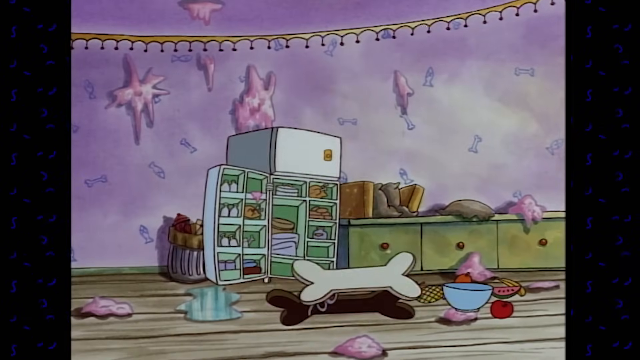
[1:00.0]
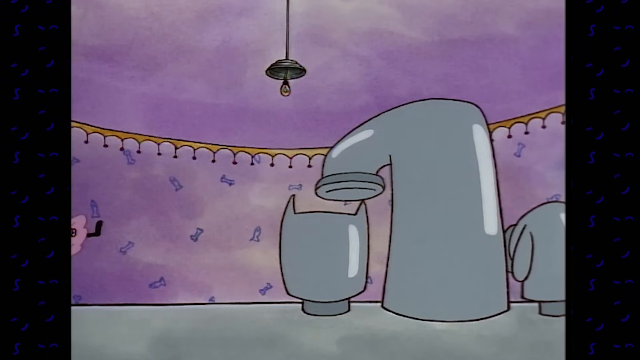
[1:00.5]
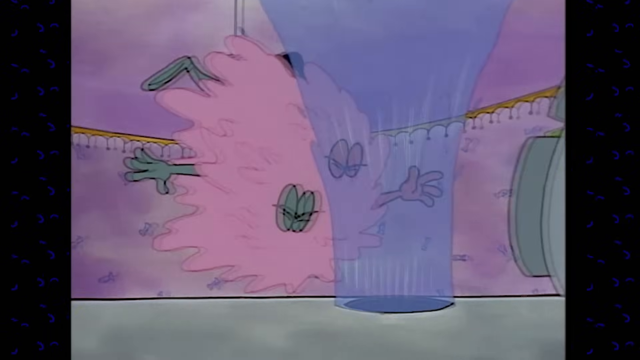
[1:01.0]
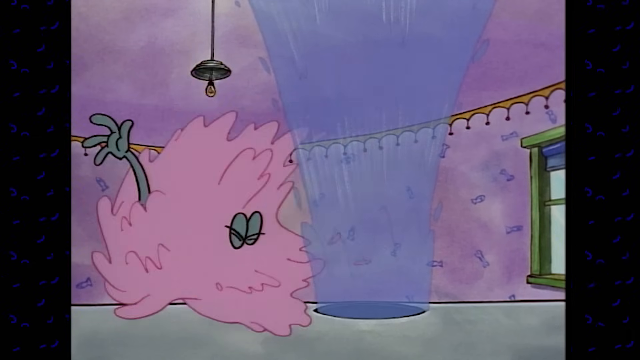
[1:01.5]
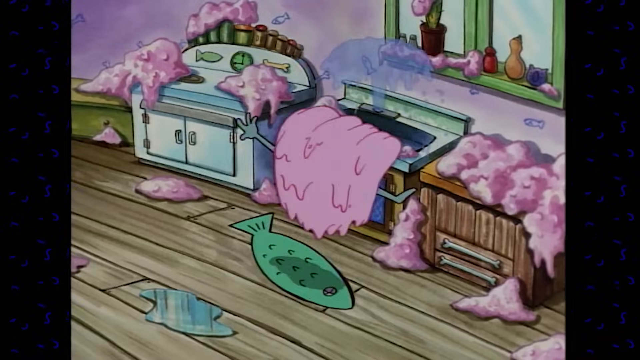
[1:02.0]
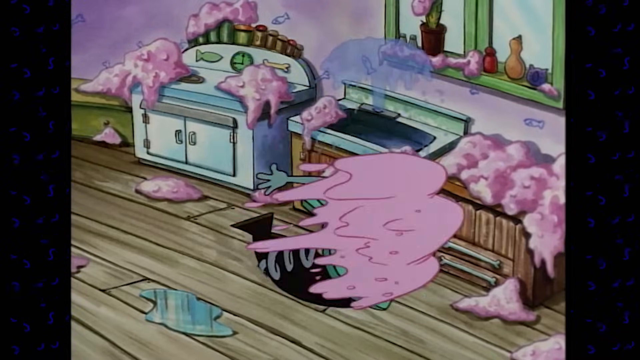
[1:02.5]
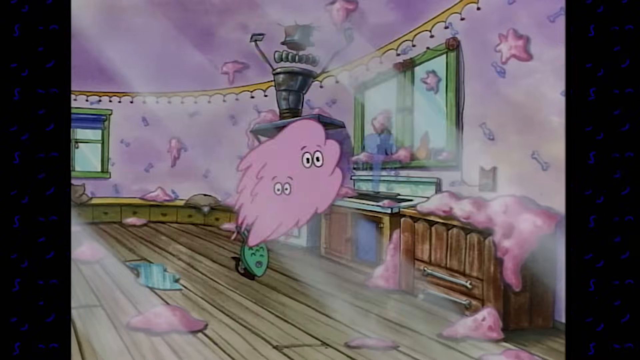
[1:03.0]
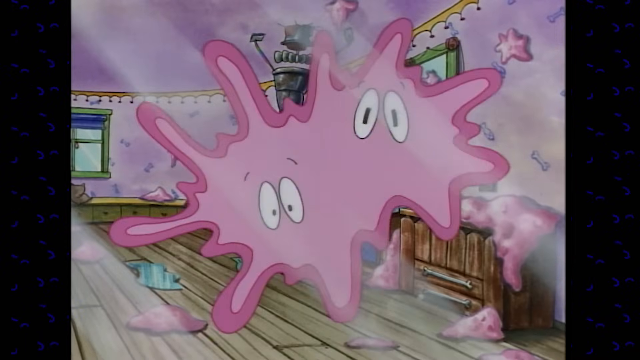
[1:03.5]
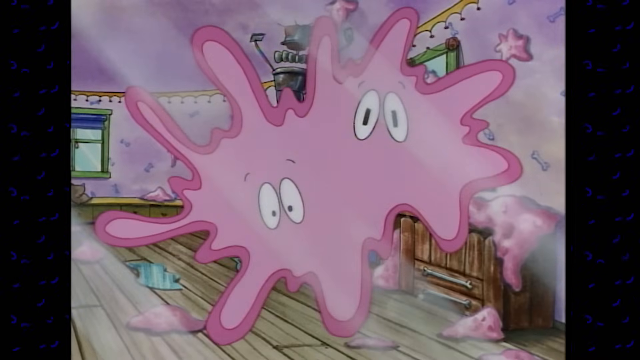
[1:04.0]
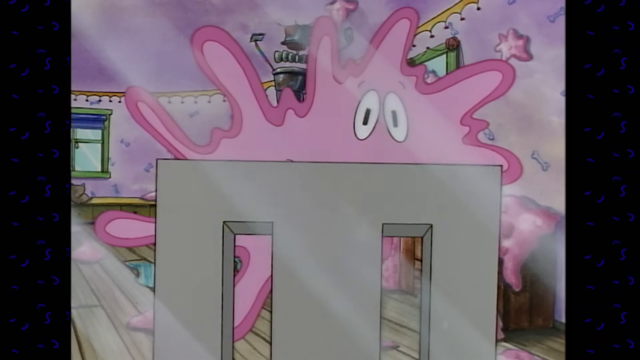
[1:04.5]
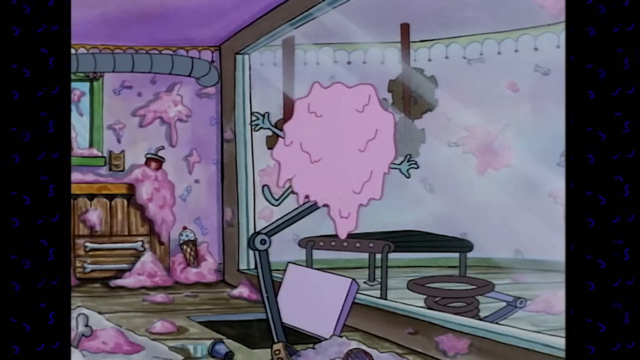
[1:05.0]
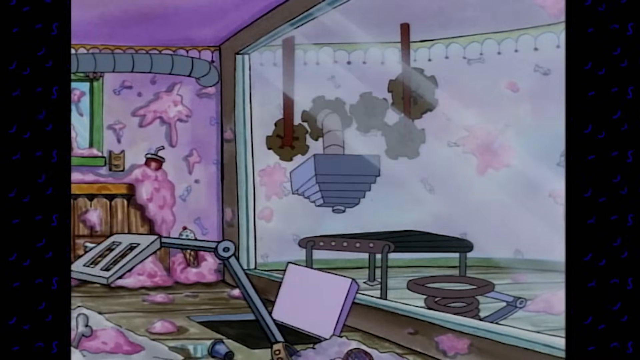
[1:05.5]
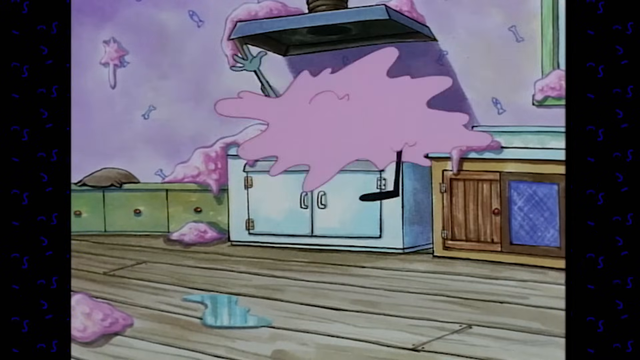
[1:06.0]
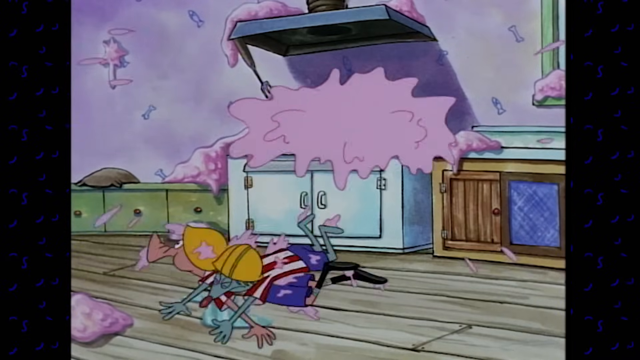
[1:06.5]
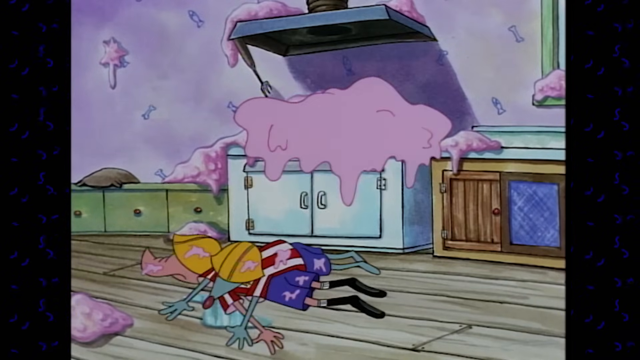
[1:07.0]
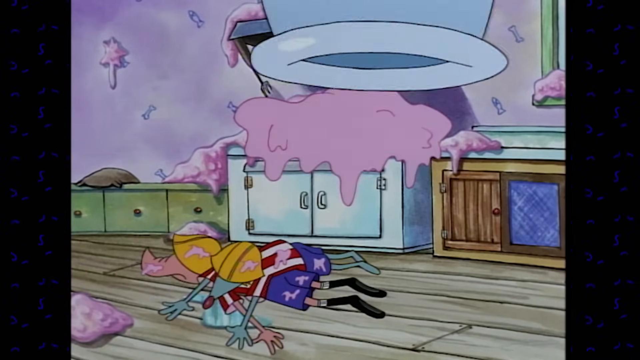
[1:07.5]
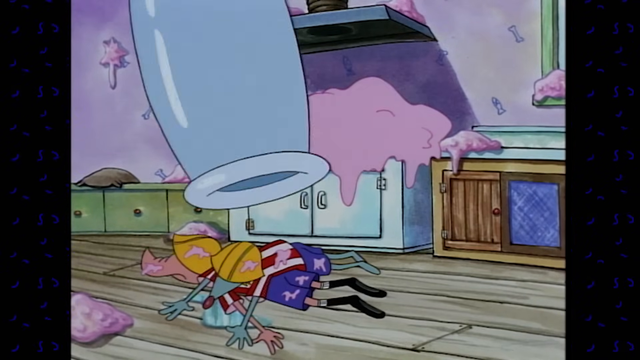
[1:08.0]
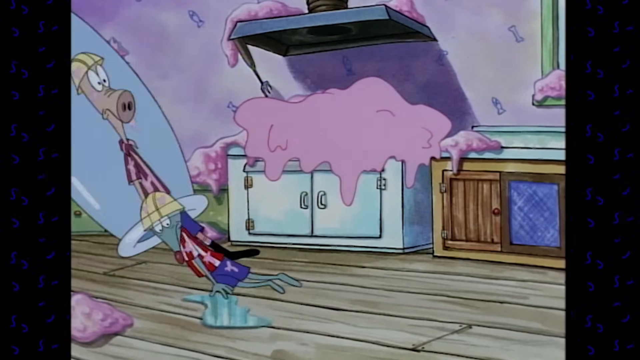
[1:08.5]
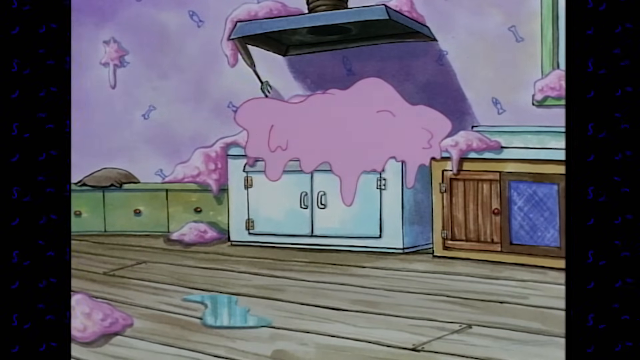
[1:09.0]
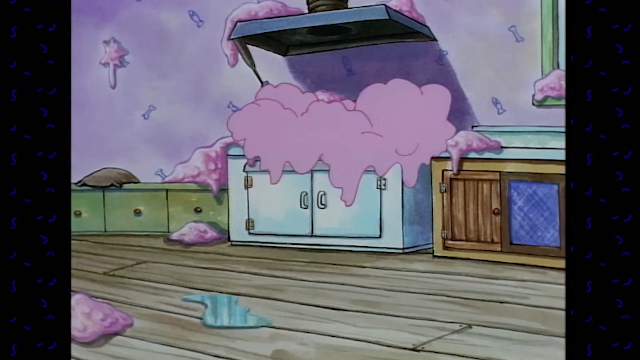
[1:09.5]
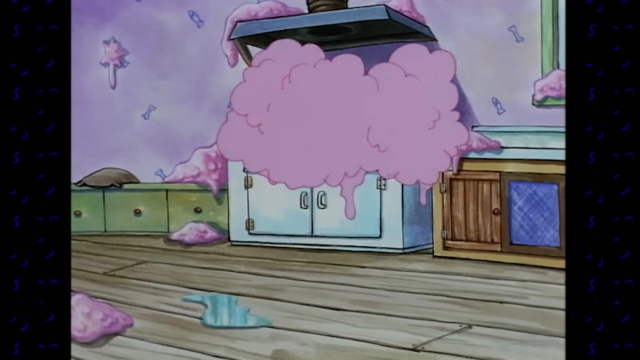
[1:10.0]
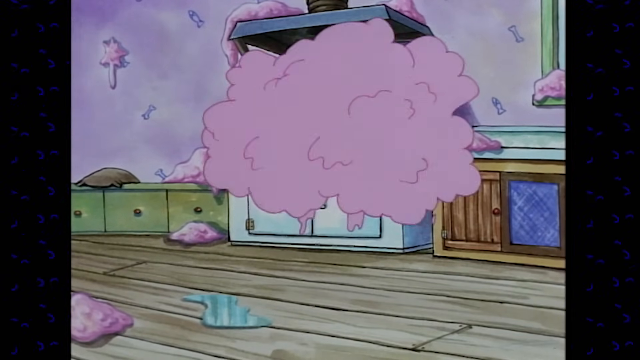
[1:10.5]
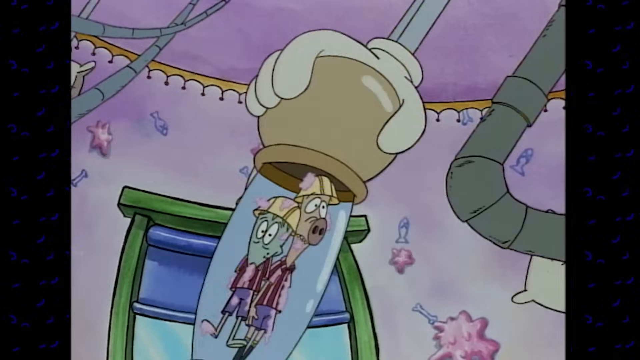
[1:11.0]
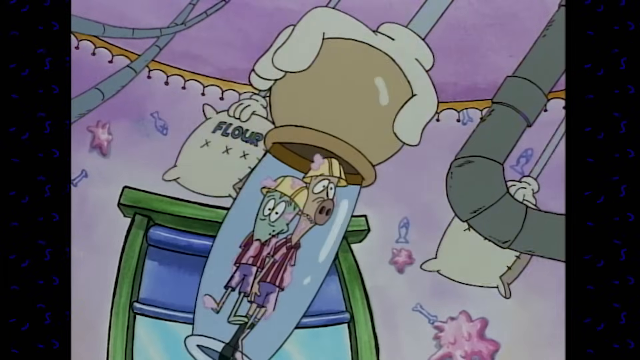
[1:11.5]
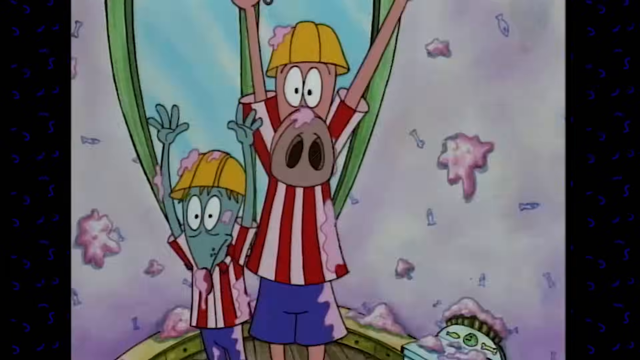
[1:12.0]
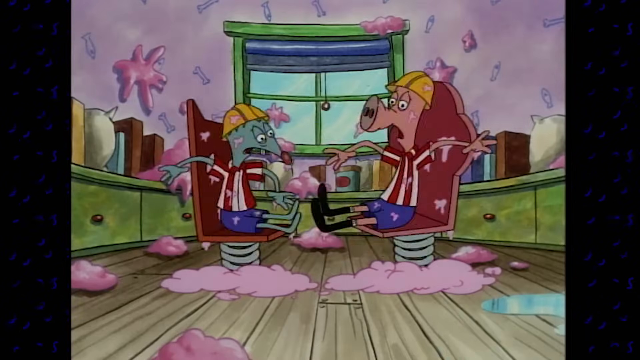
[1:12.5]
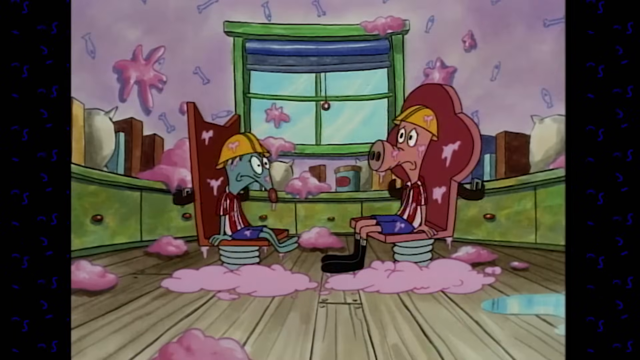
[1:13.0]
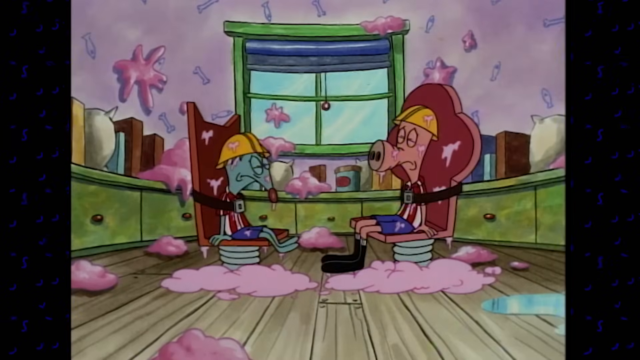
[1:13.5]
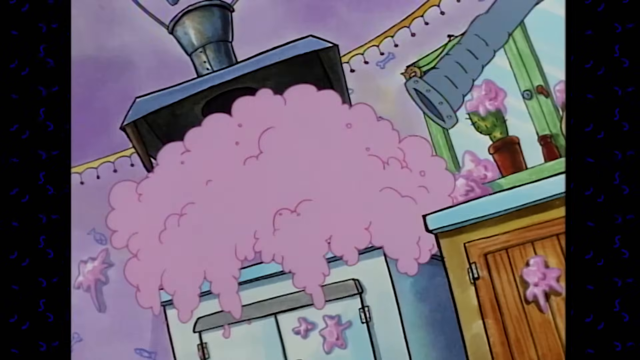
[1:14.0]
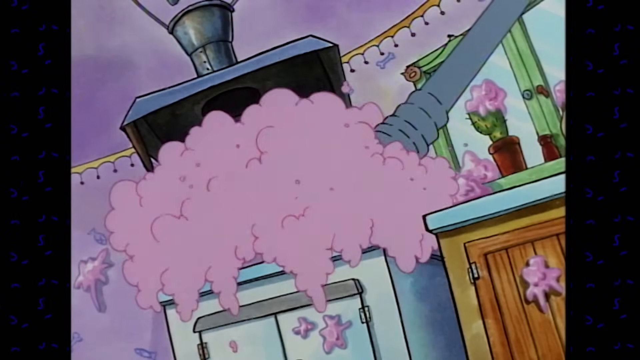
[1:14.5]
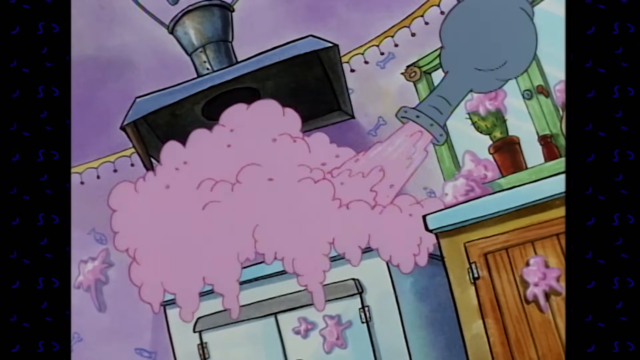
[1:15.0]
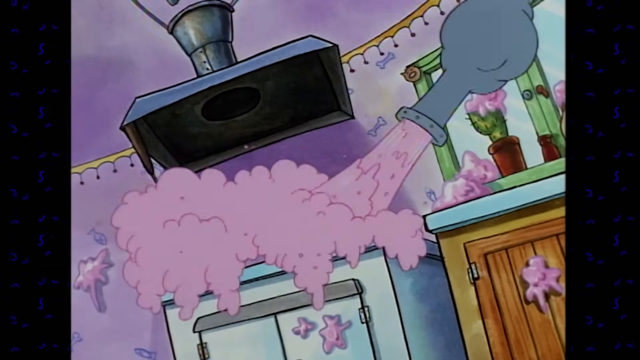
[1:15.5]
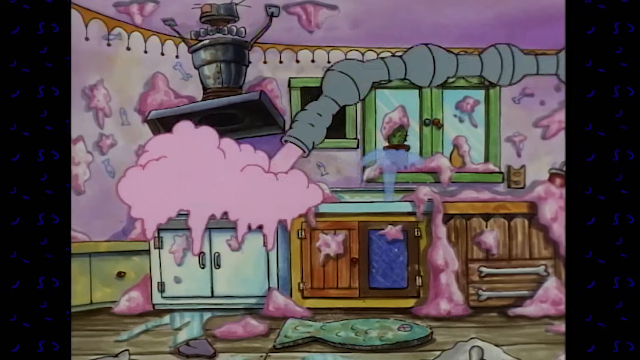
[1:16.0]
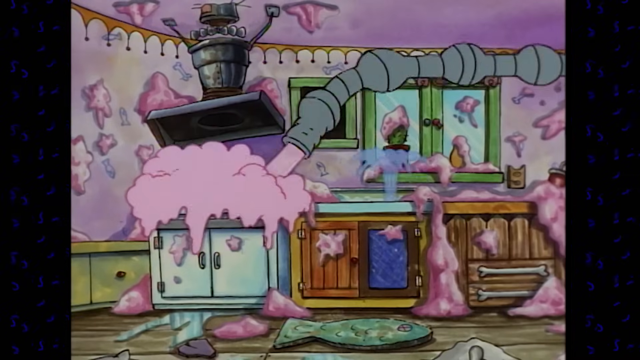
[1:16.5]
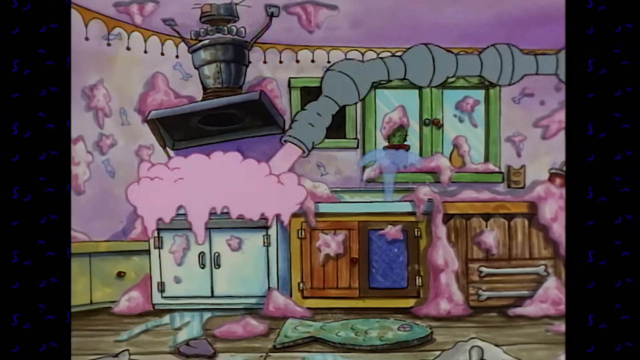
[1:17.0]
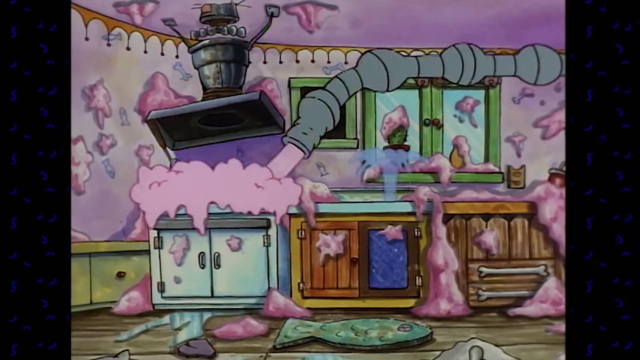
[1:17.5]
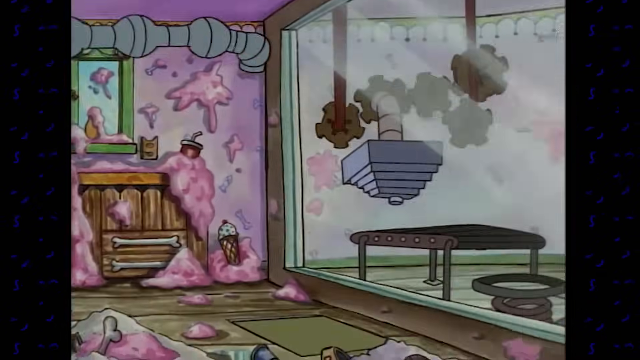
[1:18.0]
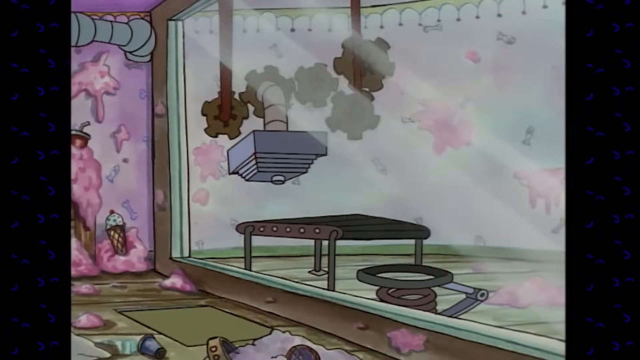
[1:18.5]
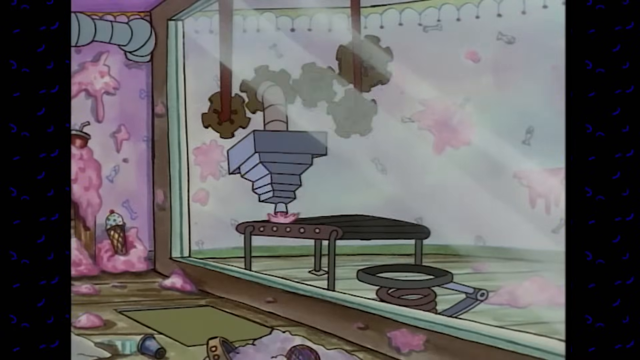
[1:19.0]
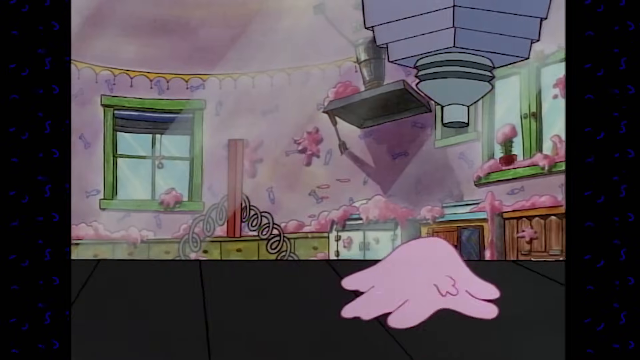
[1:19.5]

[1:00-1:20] Having been flung through the air by the bone-shaped floor panel, the two are covered in goo and fly to the sink, destroying it, and water spills over the sink like a little fountain. Another spring trap opens in the floor and flings them onto a glass window that seems to divide the room. A large spatula rises from the floor and scrapes them off the glass divider. They land on the floor, goo spilling everywhere, and they are mostly clean. A flexible transparent pipe that looks like a vacuum comes in from one side of the frame and sucks them up, though where they are sucked into is not visible. The goo appears to be growing larger and larger. The contraptions on the ceiling come into view, and a robotic hand squeezes the flexible transparent tube; the two are knocked out and put back into their chairs, where they are strapped in again. A flexible pipe sucks up the white goo and pumps it into the room on the other side of the glass divider, where it is made into little portions on some sort of assembly line.